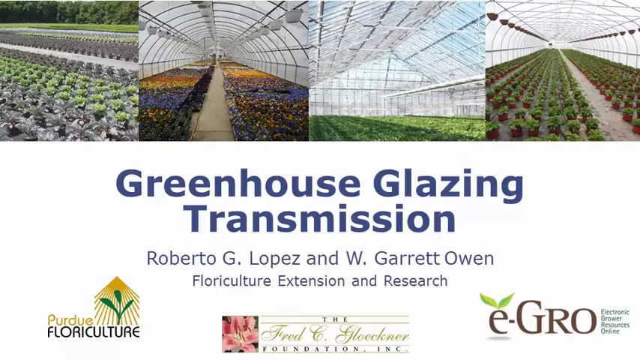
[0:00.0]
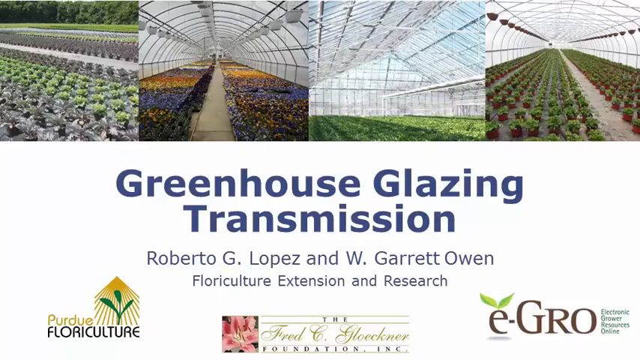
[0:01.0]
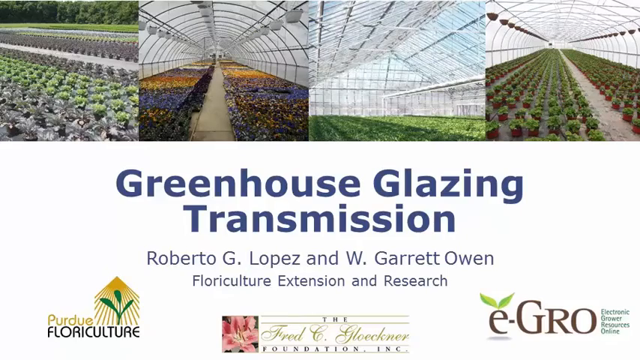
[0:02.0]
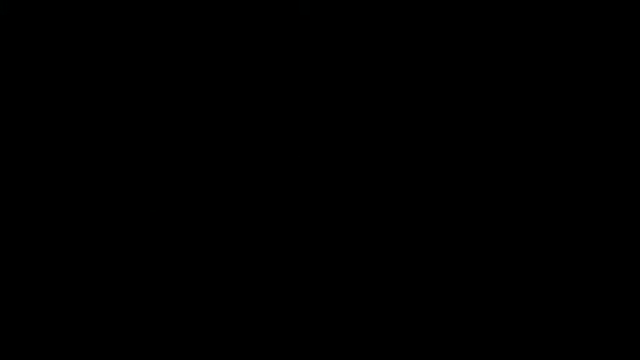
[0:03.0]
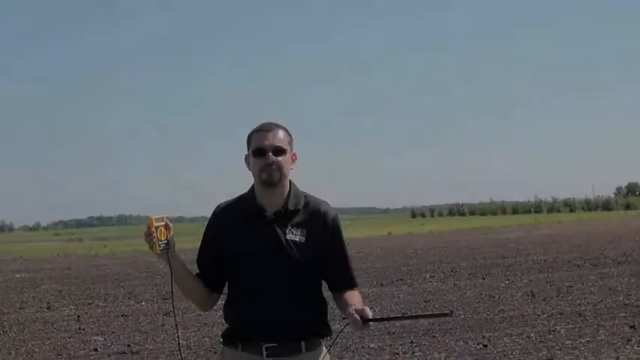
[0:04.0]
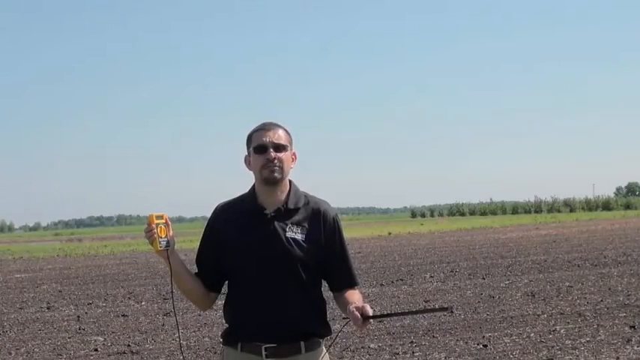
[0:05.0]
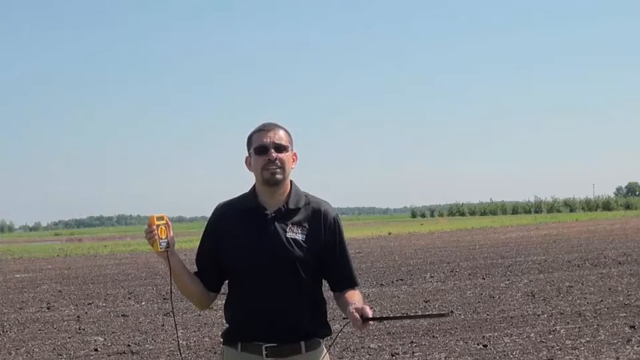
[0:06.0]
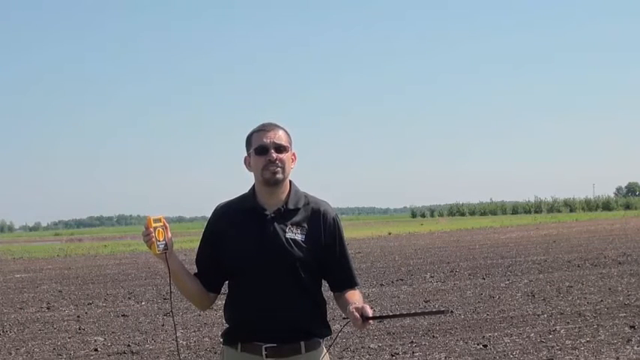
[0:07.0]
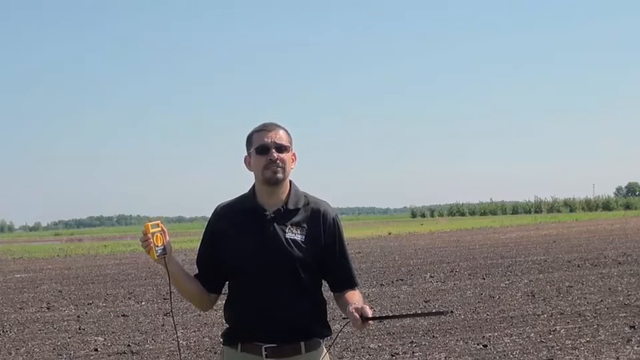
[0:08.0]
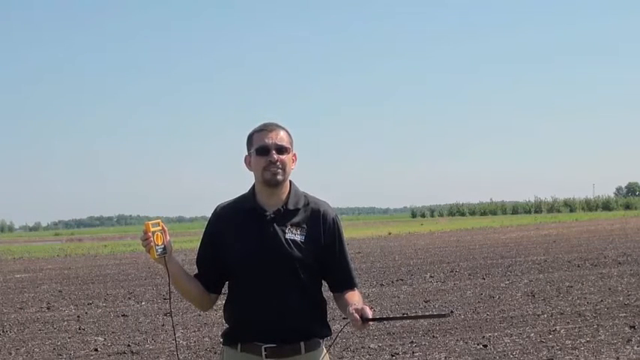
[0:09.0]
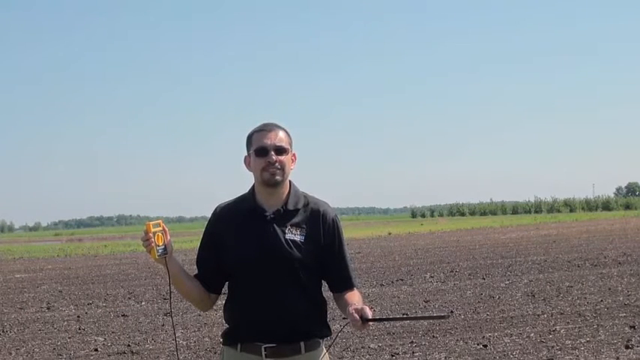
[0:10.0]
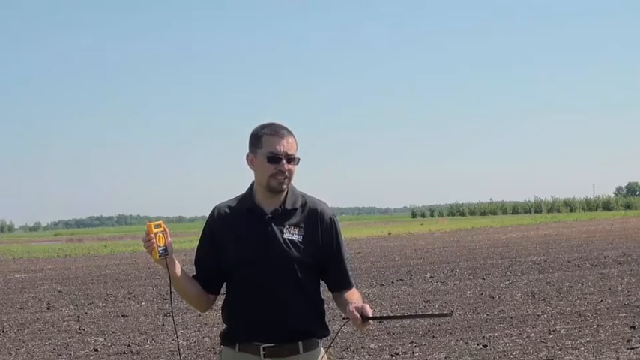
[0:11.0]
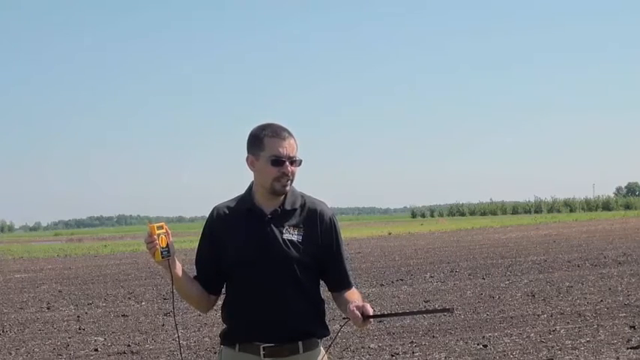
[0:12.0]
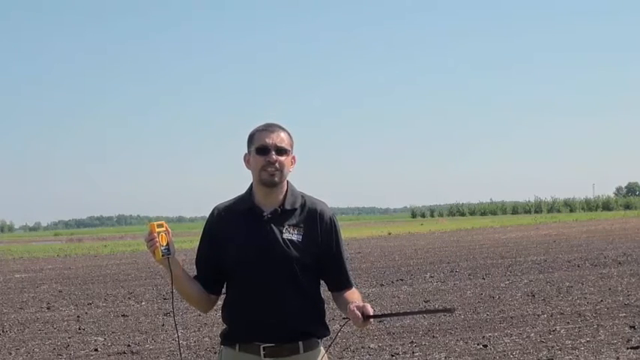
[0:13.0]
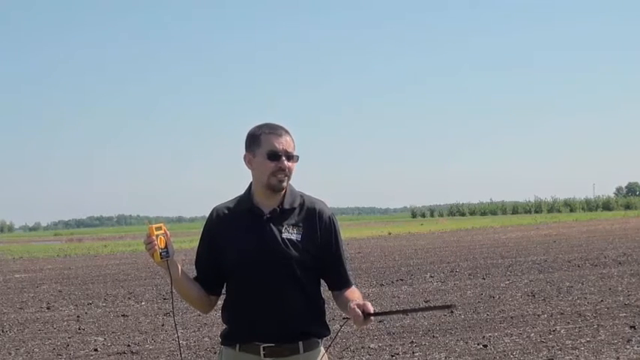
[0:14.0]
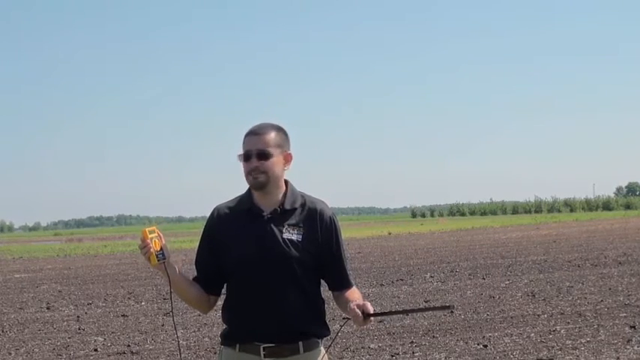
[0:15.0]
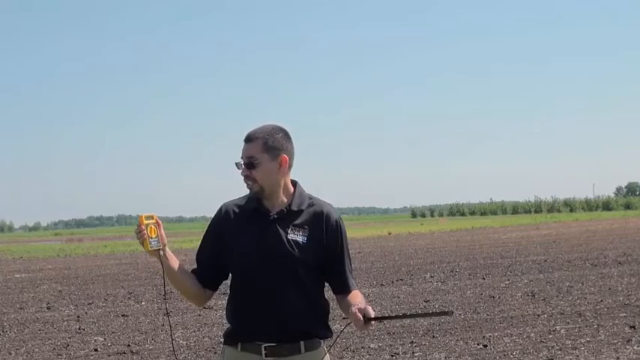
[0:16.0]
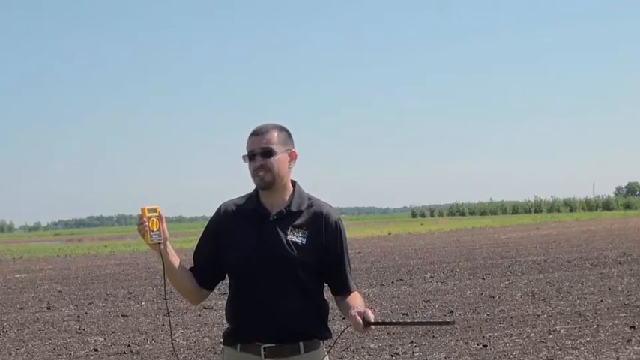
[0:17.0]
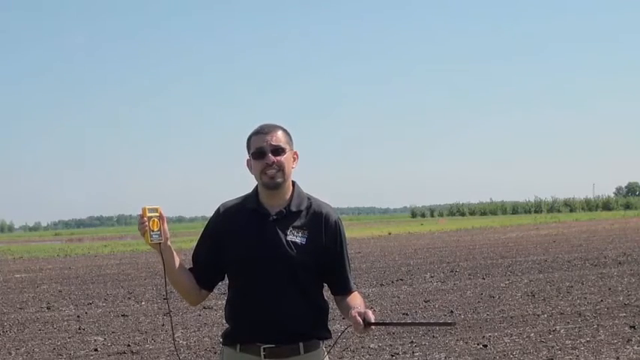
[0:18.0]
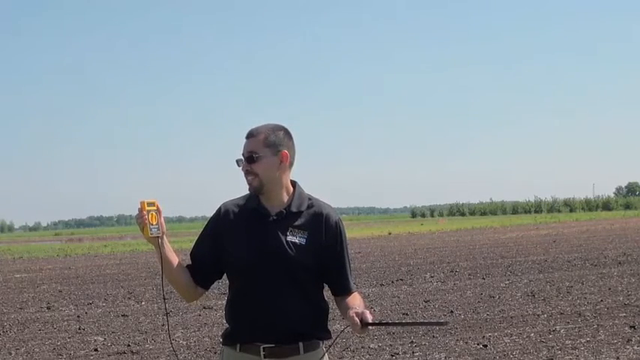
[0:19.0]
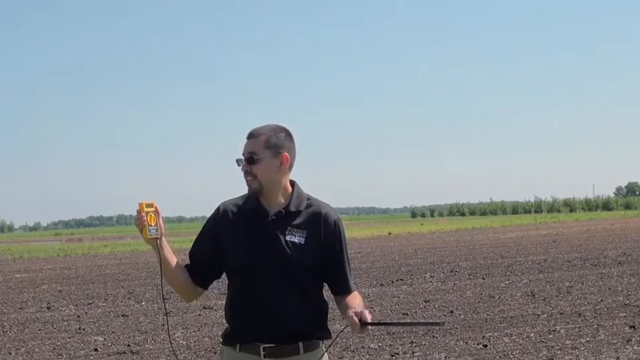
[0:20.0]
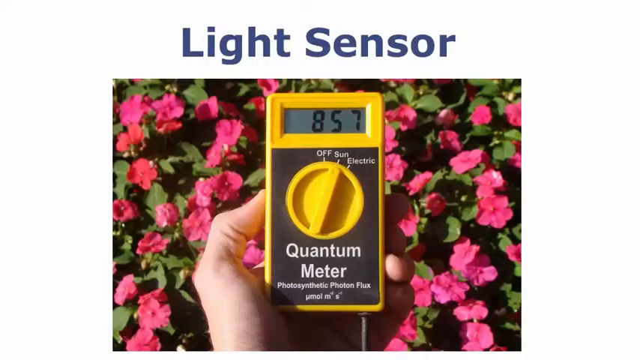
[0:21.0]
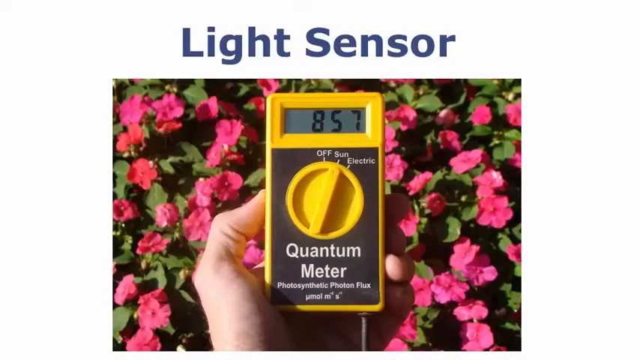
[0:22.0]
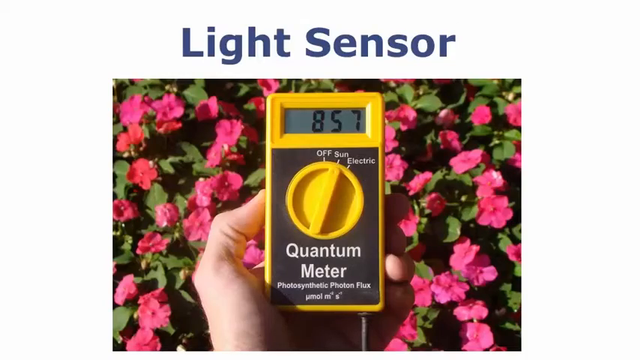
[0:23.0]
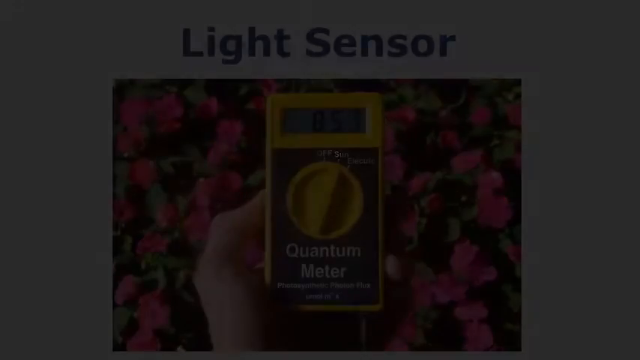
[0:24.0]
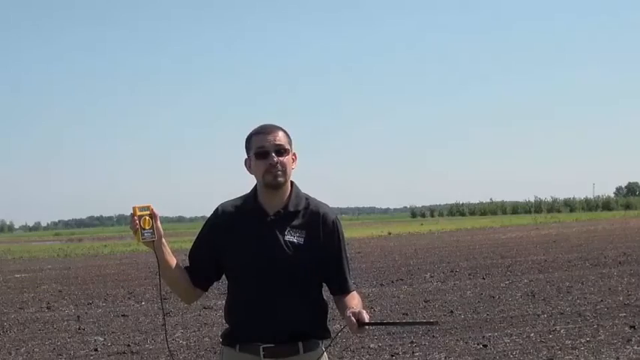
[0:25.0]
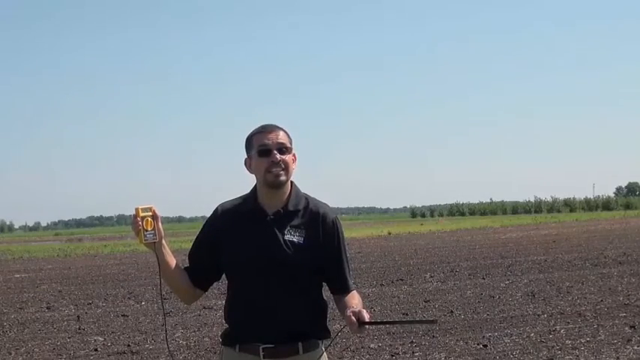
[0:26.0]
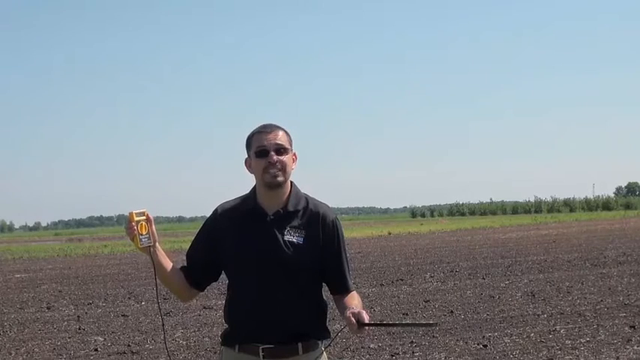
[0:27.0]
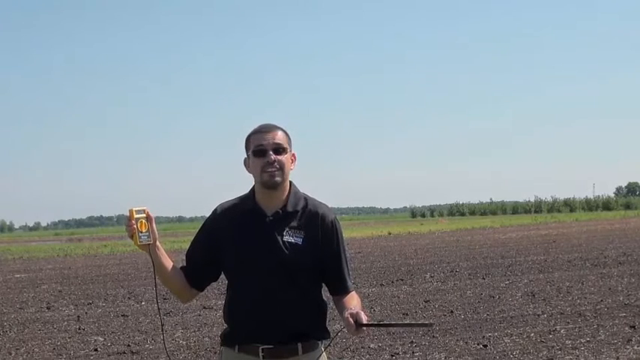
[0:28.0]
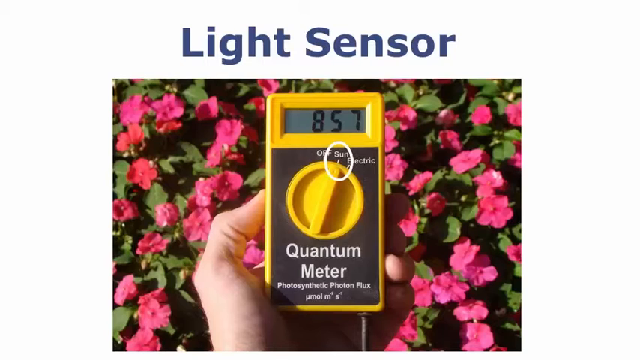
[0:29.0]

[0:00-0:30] A title slide has a white background with blue lettering at the bottom reading "Greenhouse Glazing Transmission." Below that it reads "Roberto G. Lopez and W. Garrett Owen," and underneath that "Floricultural Extension and Research." Four photographs are up top: green trees and vegetation with green and gray rows on the left side; a gray rounded greenhouse with gray, orange and purple rows on the left and right sides and a gray patch in the middle; another grayish glass roof with green vegetation below; and another grayish rounded roof with rows of green plots and a gray lining slightly to the right side. Lettering at the bottom reads "Purdue Floriculture," with yellow lined arrows going up and a green stem. The bottom middle section reads "the Fred L. Glockner" in green and black, with "foundation inc" at the bottom. A pink flower is on the left side, and on the right side black font reads "e-grow." To the right of that it reads "electric grower resource online," with a green leaf just above the e. The next shot shows a white man with sunglasses, a brown goatee and short brown hair, holding a yellow device with a black cord and a black wand in his right hand. He stands on a brown field with blue sky above him and green trees and green grass in the distance. He talks to the camera, wearing a black collared short-sleeved shirt with a white patch on the left chest, a brown belt and cream-colored pants.